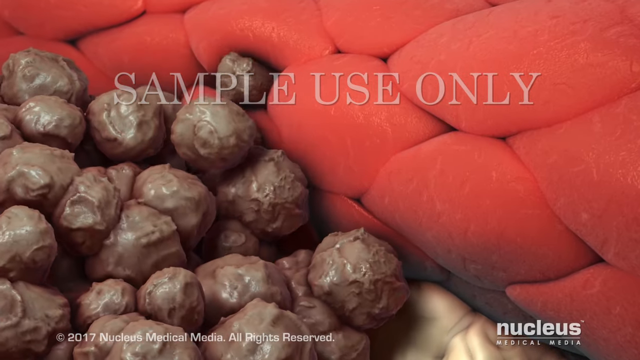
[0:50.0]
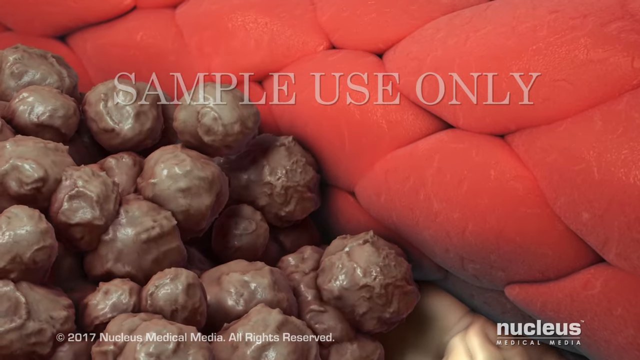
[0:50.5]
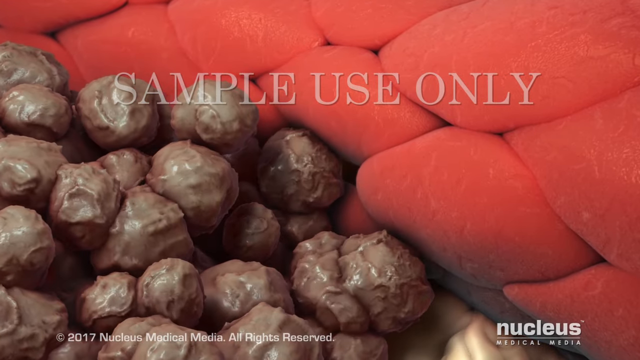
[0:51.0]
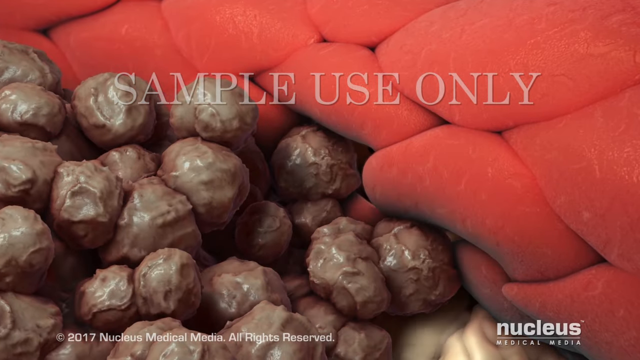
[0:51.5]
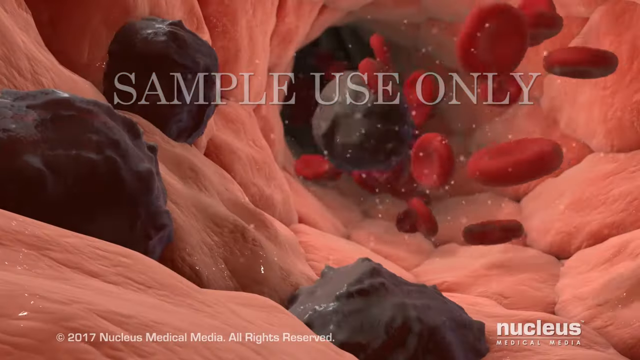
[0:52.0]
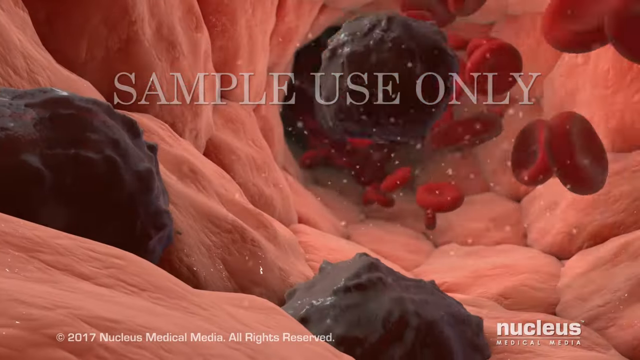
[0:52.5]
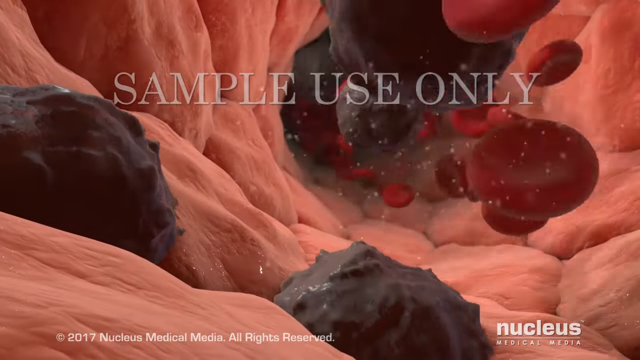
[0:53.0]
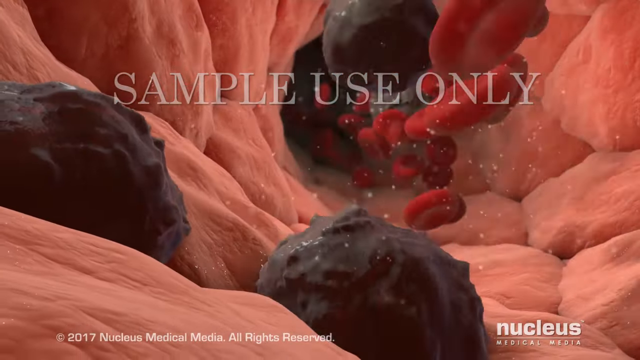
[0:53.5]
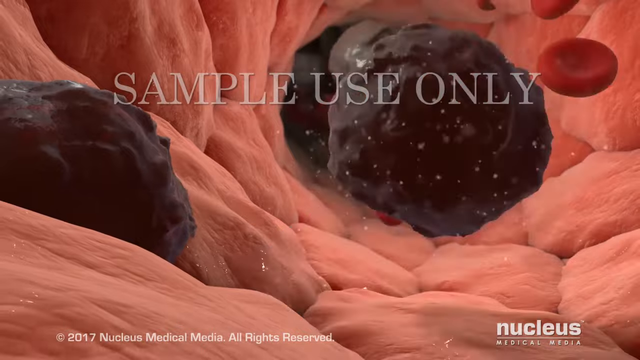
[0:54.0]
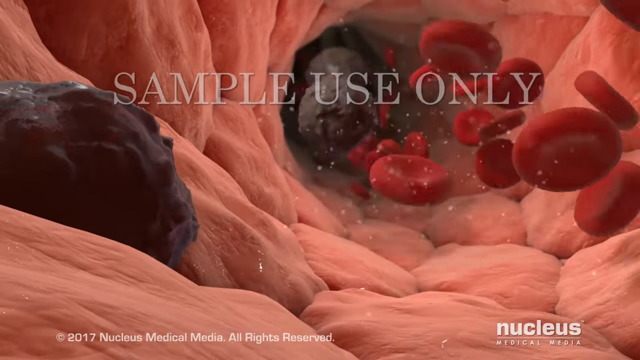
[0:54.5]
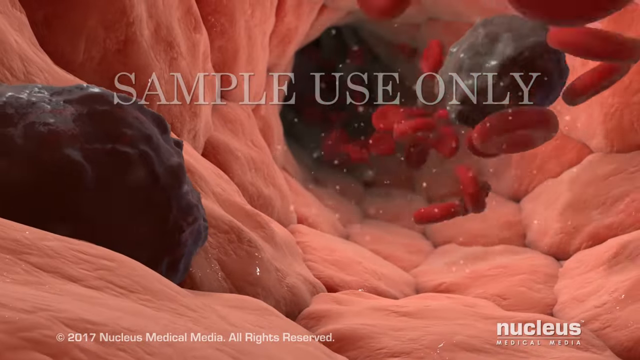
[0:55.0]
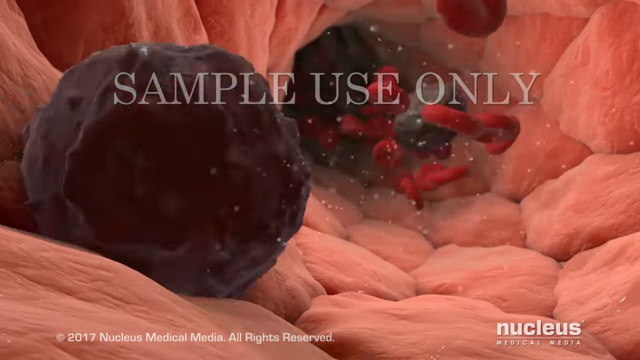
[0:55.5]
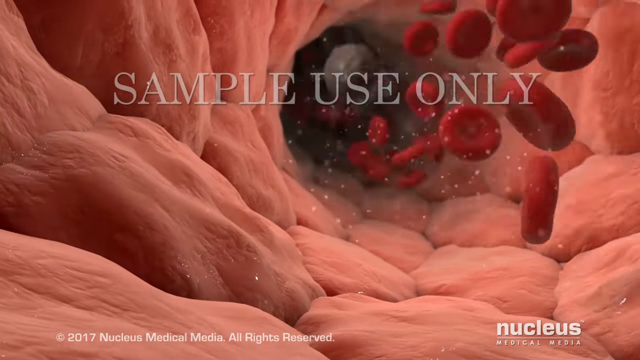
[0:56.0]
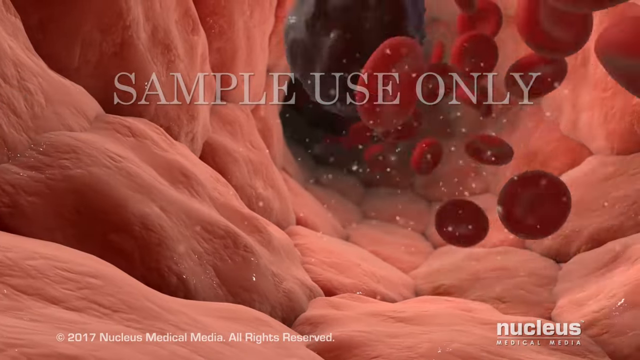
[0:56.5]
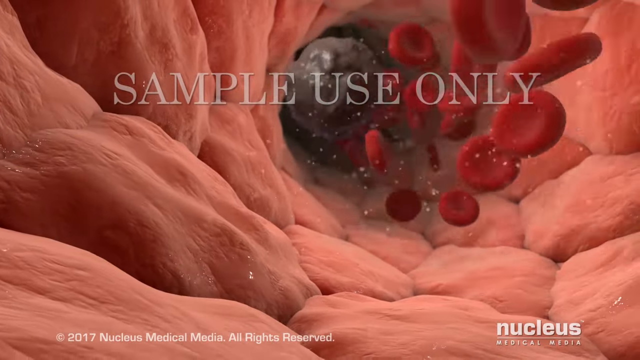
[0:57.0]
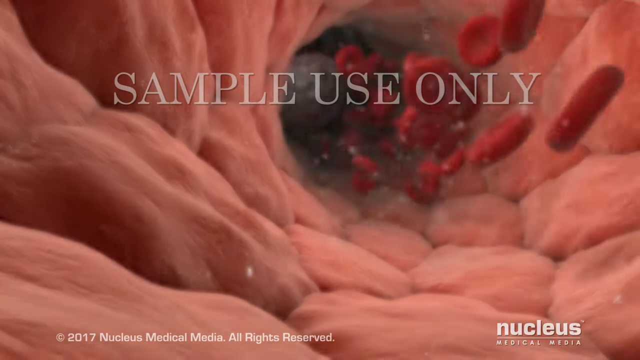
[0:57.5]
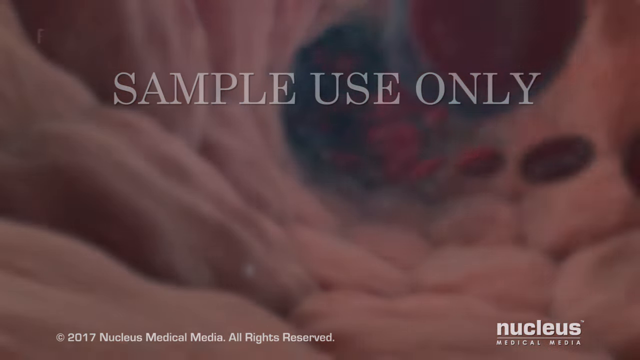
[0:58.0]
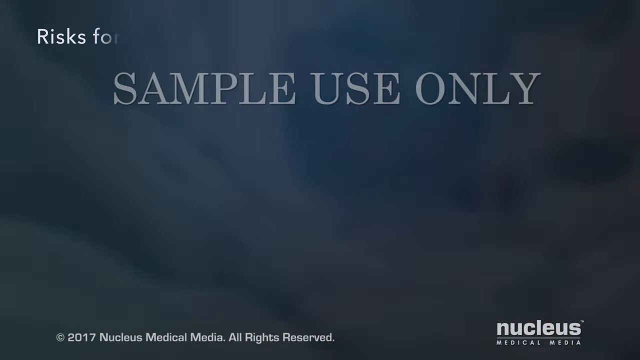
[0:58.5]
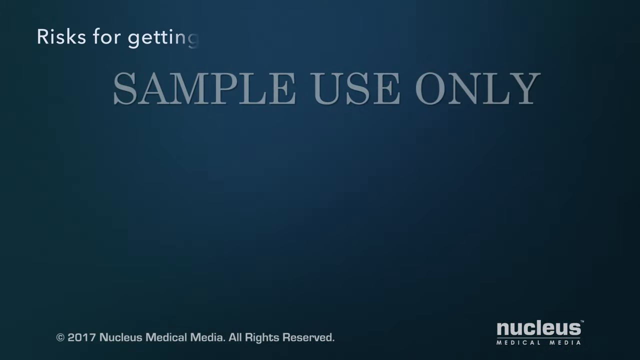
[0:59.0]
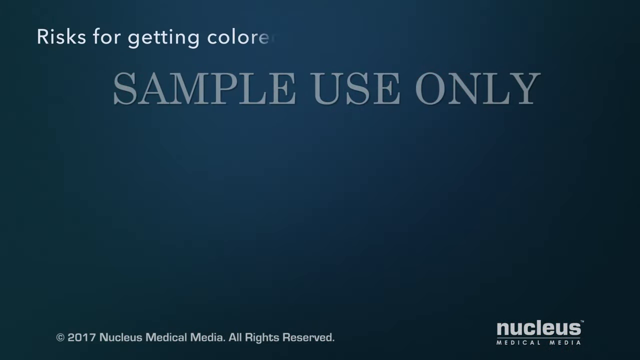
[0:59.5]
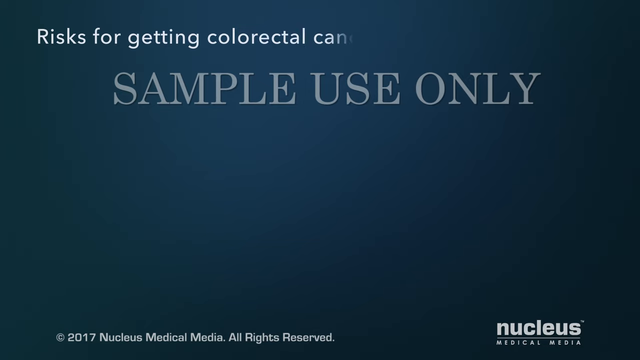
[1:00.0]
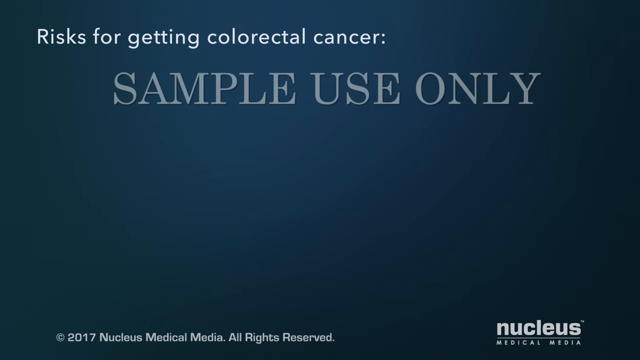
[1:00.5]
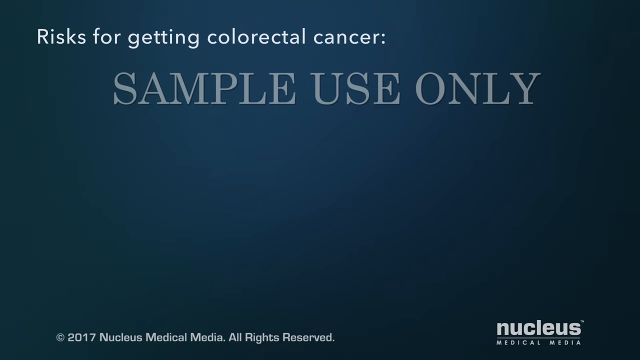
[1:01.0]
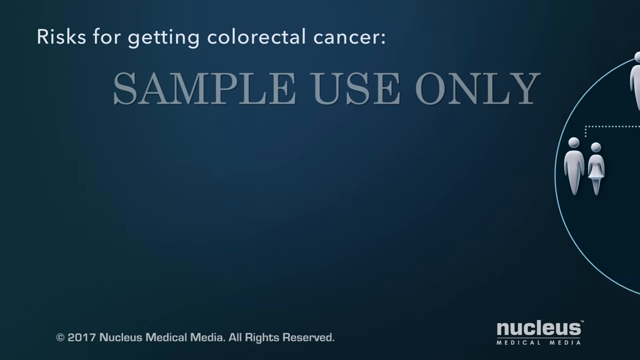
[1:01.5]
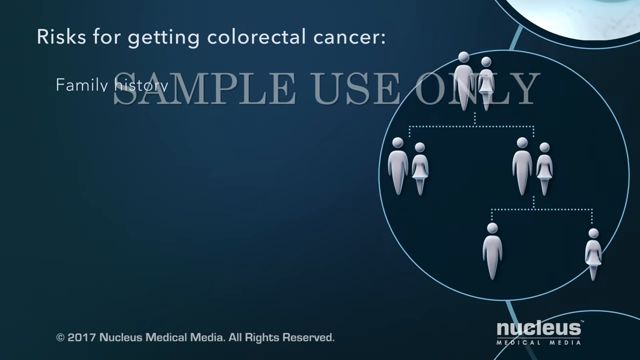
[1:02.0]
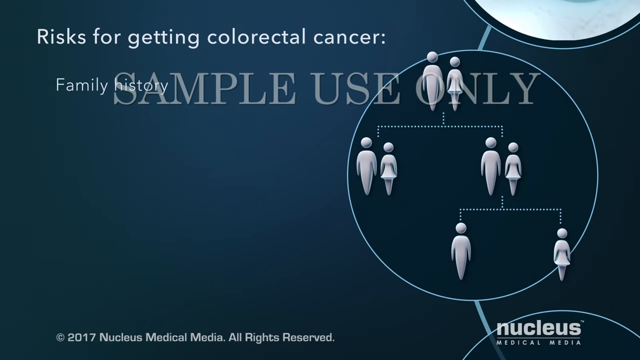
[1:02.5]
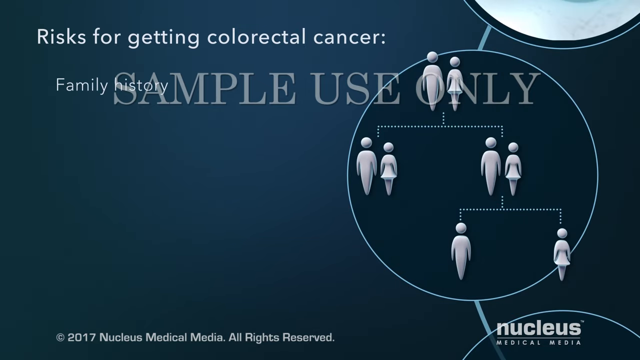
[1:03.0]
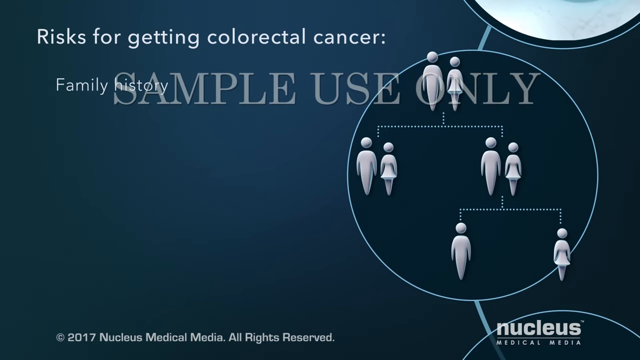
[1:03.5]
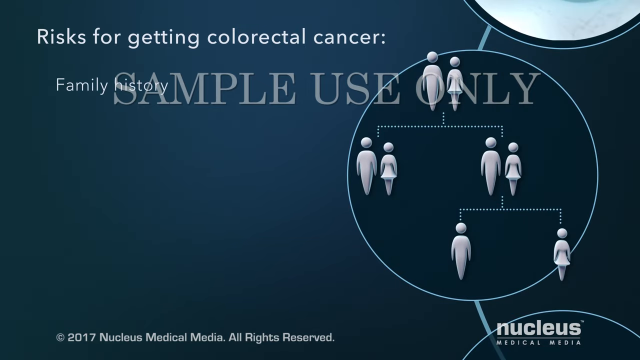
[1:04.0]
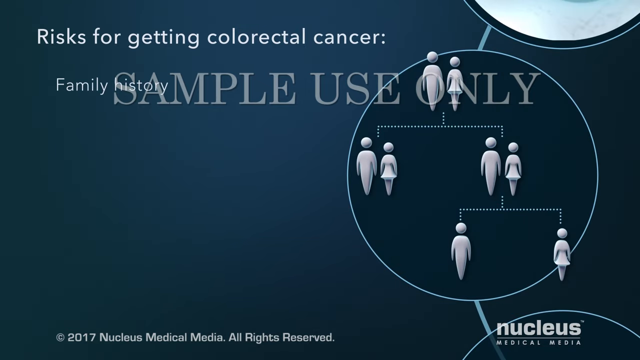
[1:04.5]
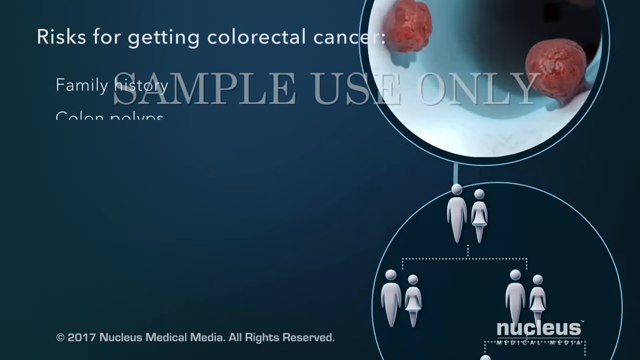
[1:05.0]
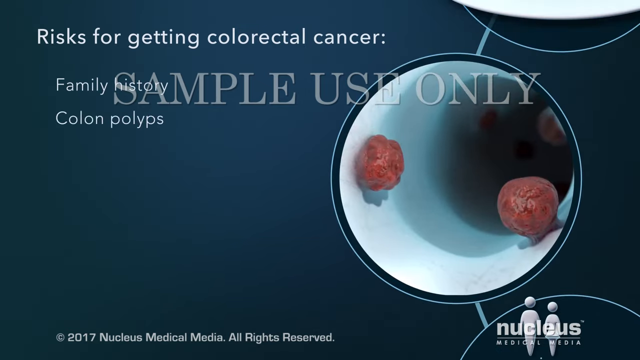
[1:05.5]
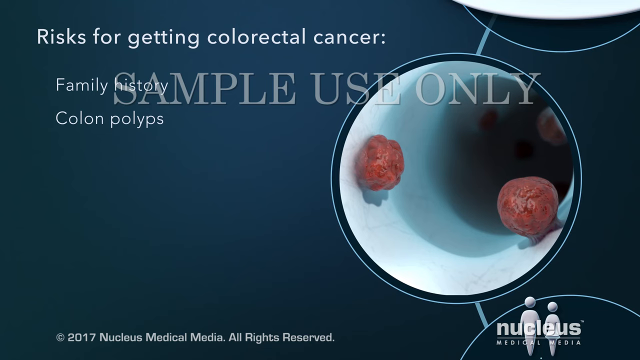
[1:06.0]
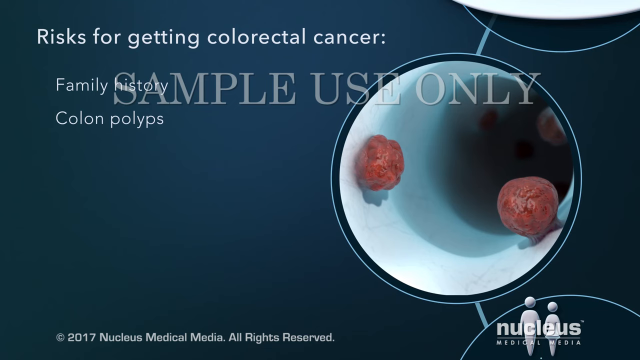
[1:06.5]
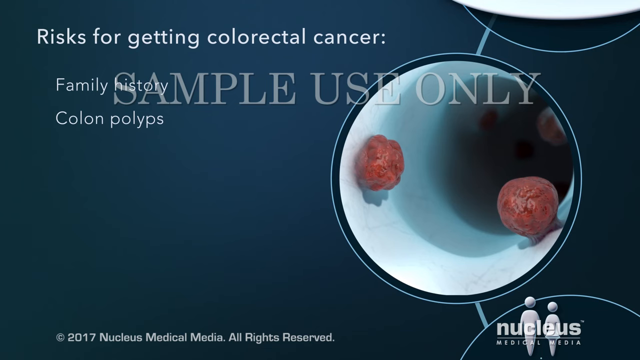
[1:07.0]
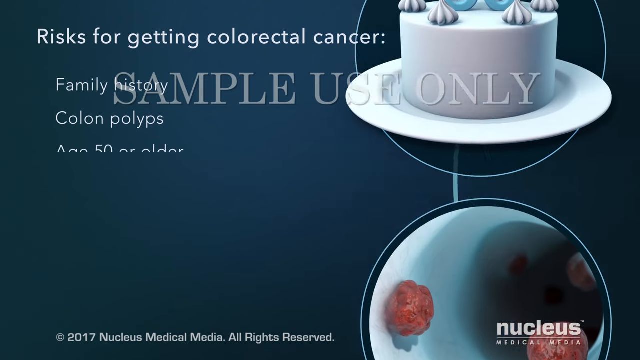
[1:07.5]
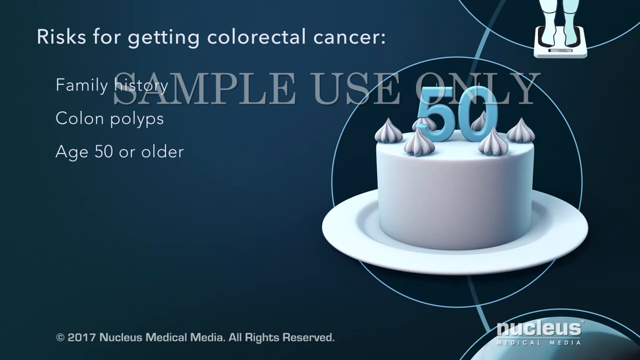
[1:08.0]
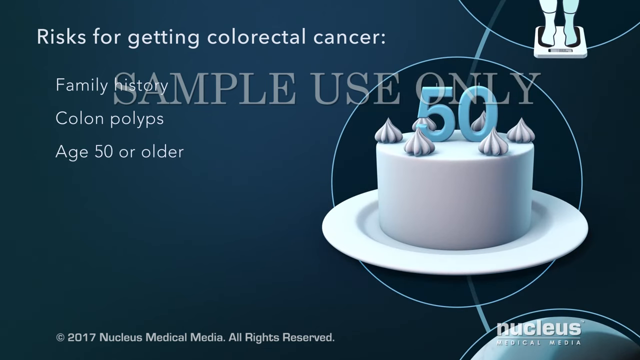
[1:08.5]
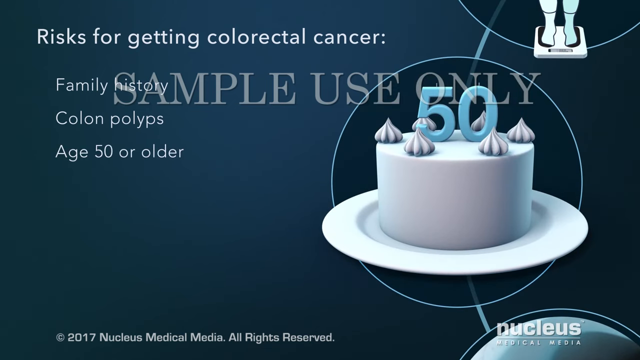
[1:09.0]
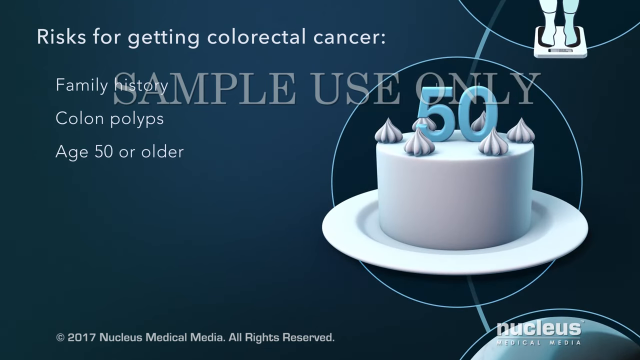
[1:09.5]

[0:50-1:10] The navy title card shows "sample use only" in gray and then "understanding colorectal cancer." The view zooms in on the intestines in a digitally rendered human body, where the colon, the rectum and then the anal canal are highlighted. Zooming in on the anal canal reveals dark-colored polyps lining the wall, and then the white cells within one of them, labeled "abnormal." The white cells start turning brown and grow down toward the stem of the polyp. The view zooms in further as the cells enter the bloodstream and make their way down the canal, with "sample use only" still on screen. White text across the top reads "risks for getting colorectal cancer," followed by "family history," "colon polyps" and "age 50 or older"; as these pop up, small digital drawings such as stick figures and a birthday cake for the age appear next to them. The bottom right corner reads "nucleus medical media" and the bottom left reads "copyright 2017 nucleus medical media."